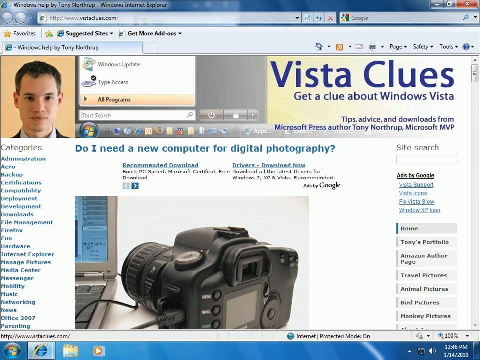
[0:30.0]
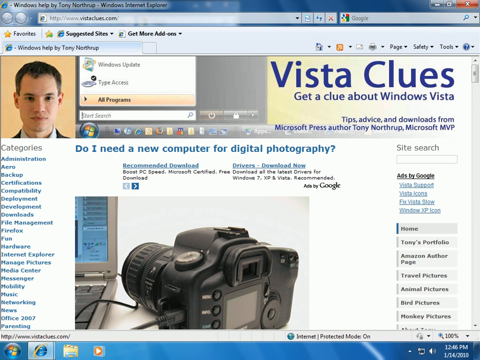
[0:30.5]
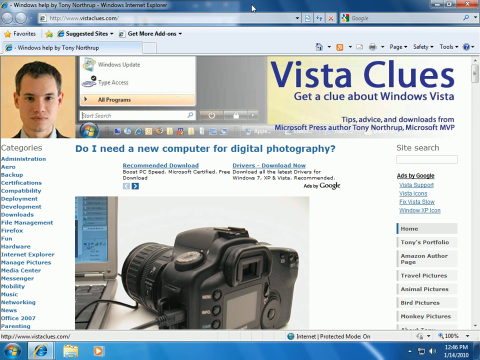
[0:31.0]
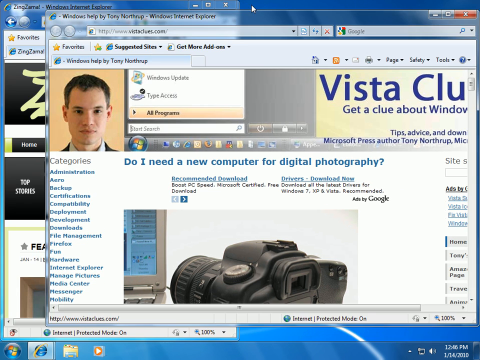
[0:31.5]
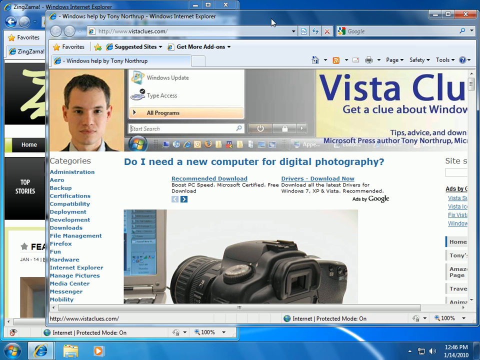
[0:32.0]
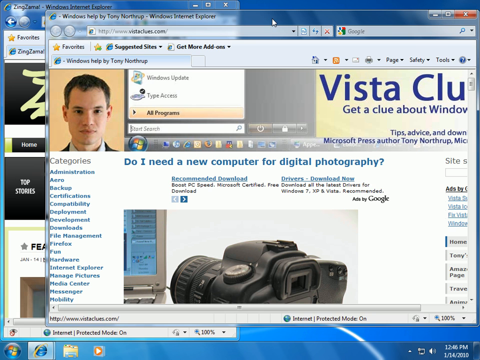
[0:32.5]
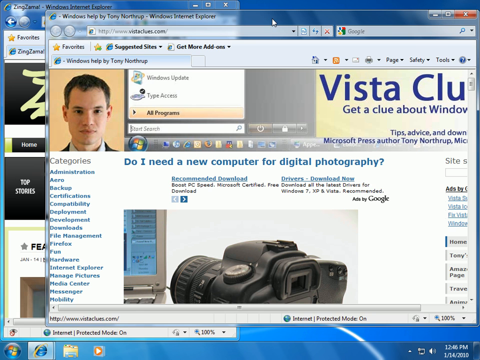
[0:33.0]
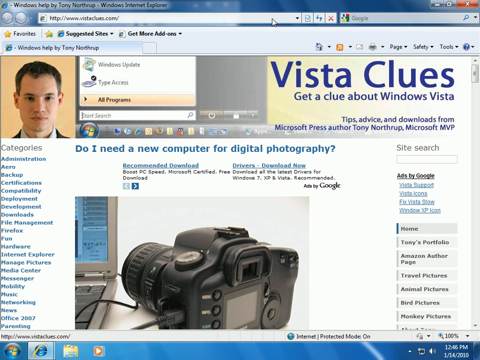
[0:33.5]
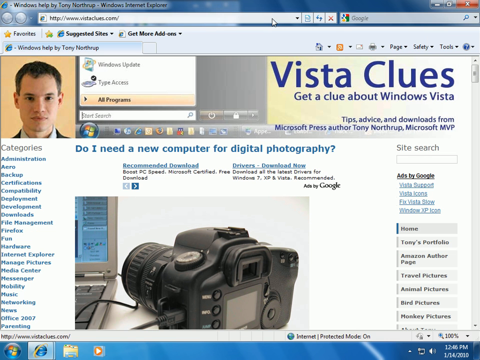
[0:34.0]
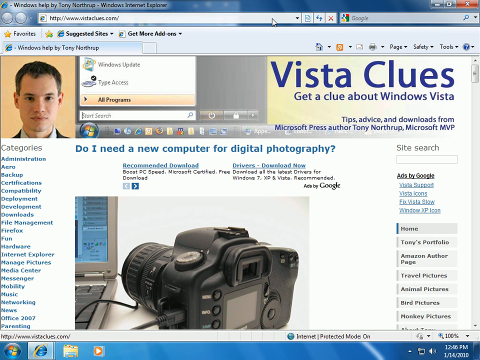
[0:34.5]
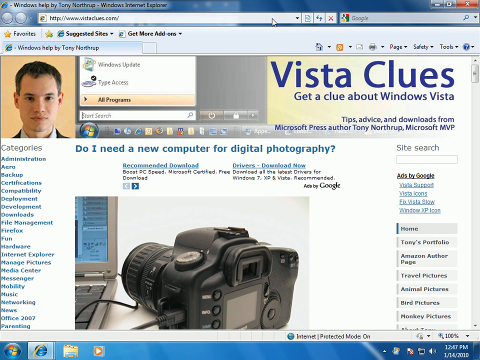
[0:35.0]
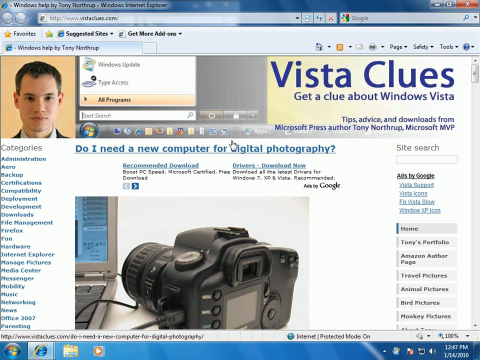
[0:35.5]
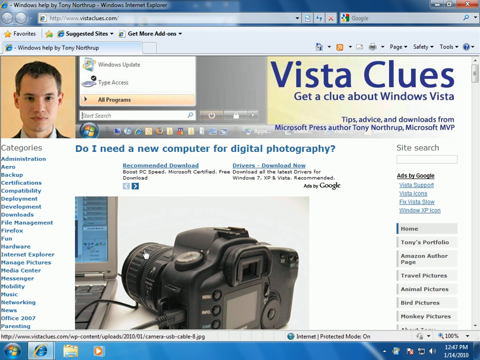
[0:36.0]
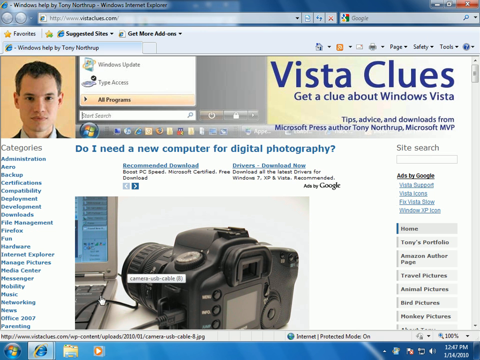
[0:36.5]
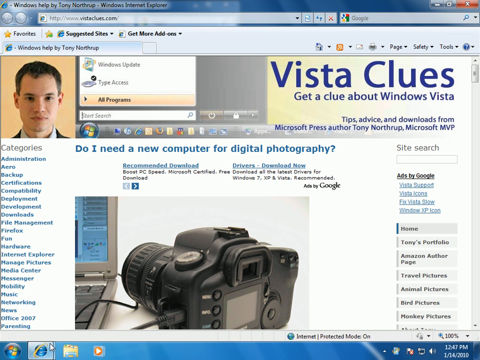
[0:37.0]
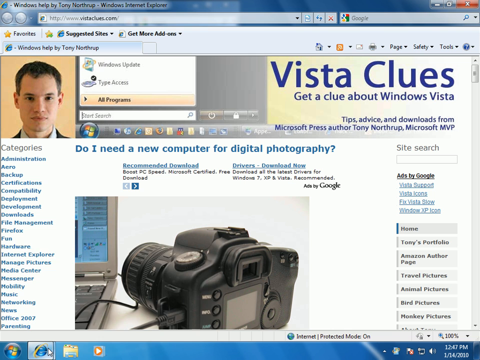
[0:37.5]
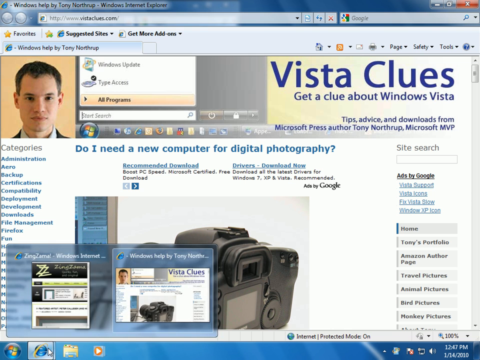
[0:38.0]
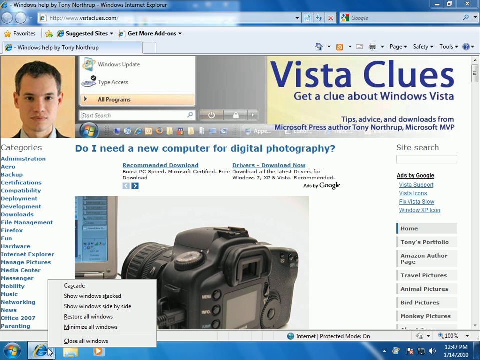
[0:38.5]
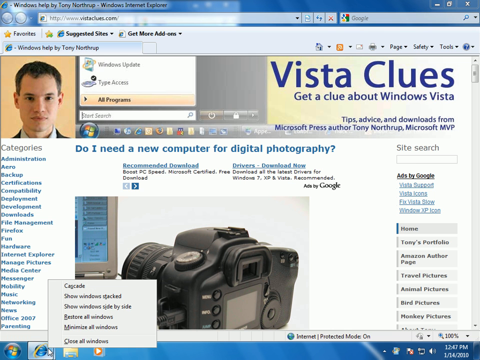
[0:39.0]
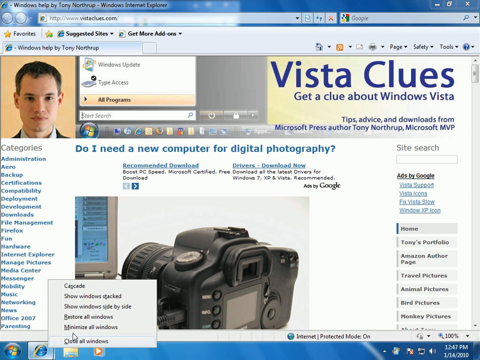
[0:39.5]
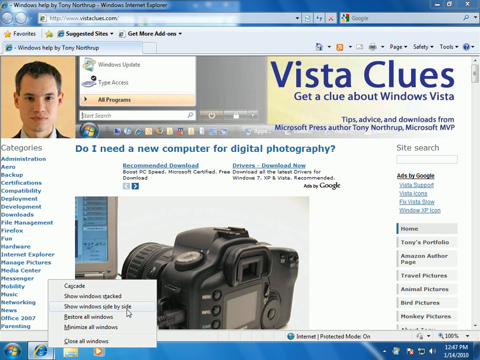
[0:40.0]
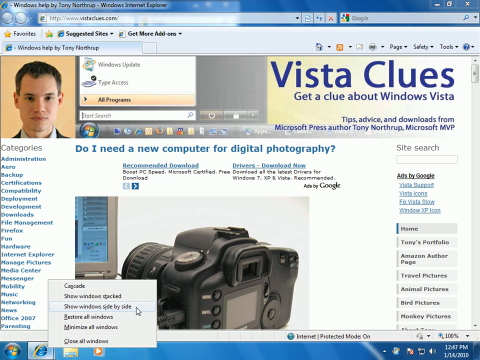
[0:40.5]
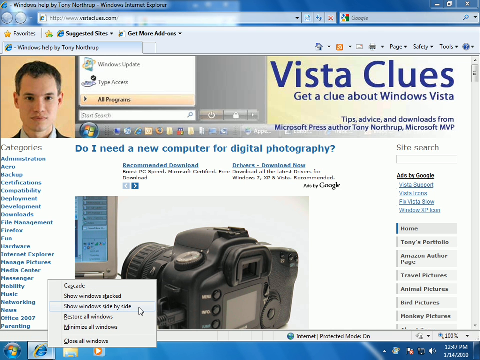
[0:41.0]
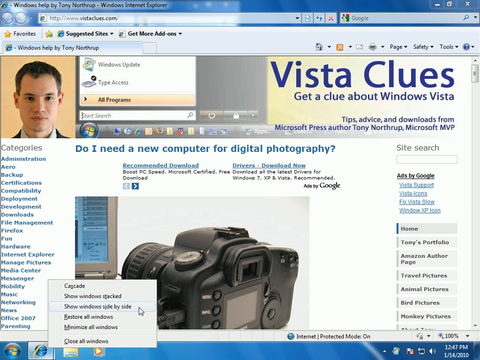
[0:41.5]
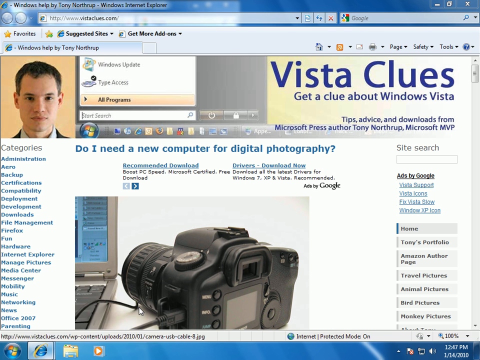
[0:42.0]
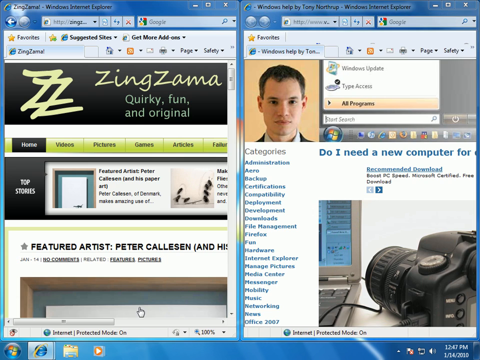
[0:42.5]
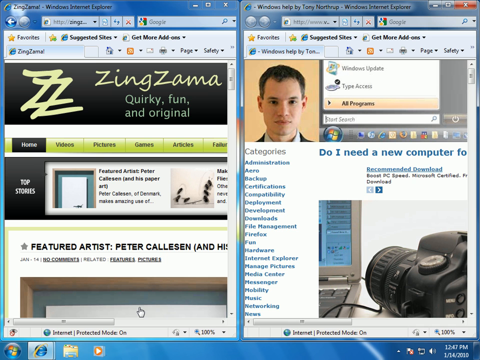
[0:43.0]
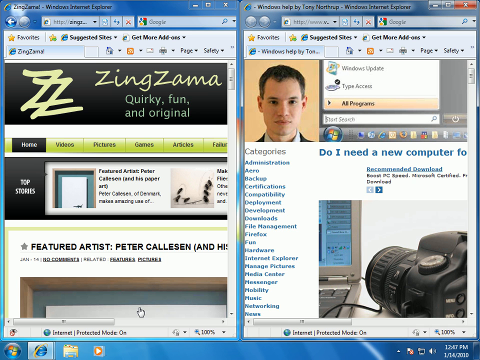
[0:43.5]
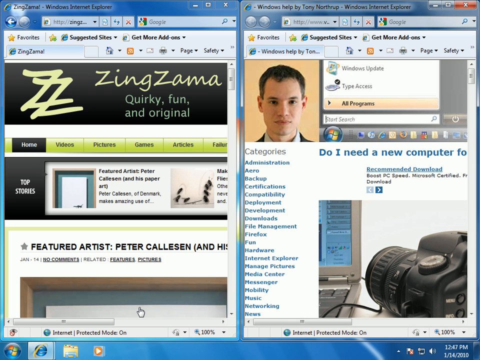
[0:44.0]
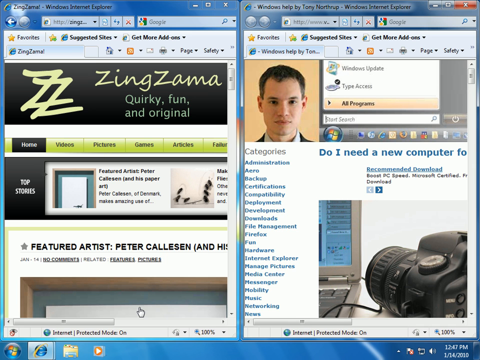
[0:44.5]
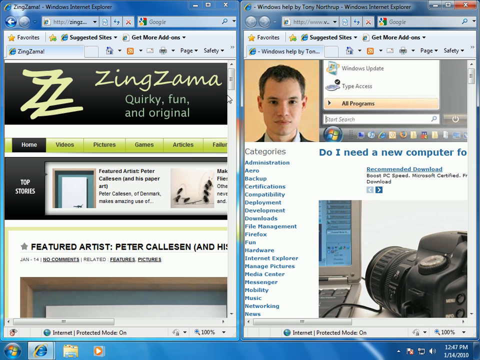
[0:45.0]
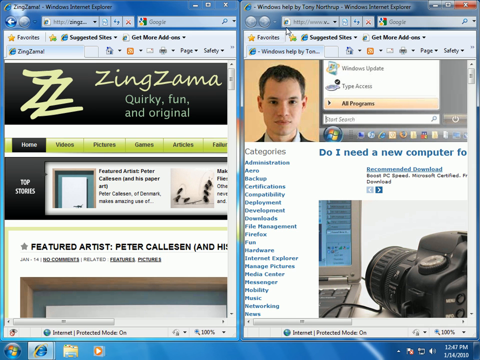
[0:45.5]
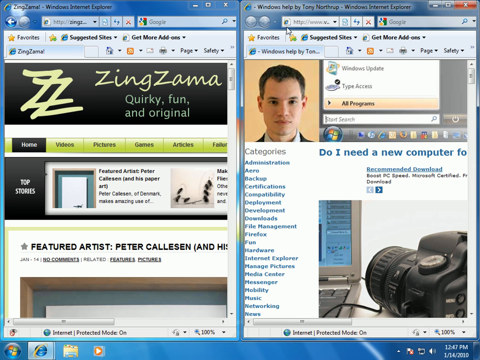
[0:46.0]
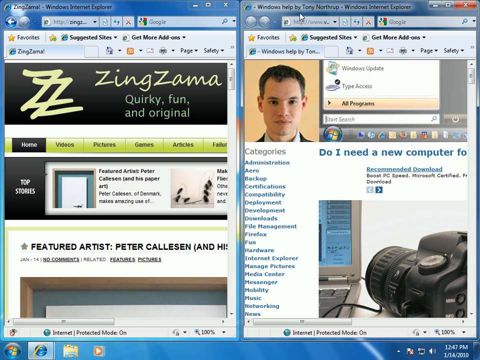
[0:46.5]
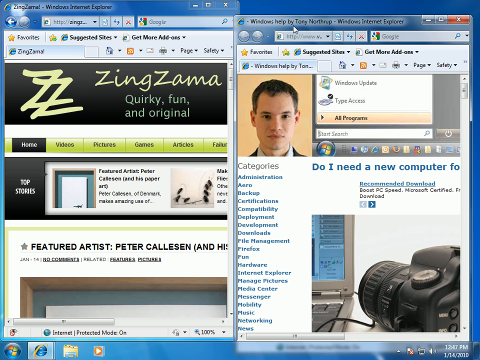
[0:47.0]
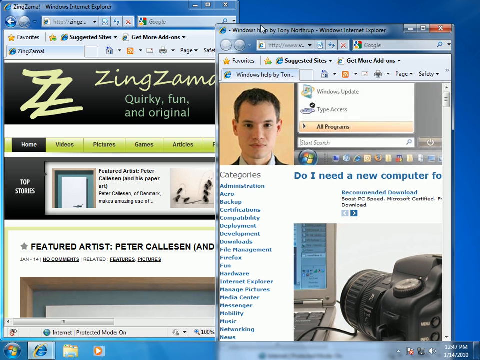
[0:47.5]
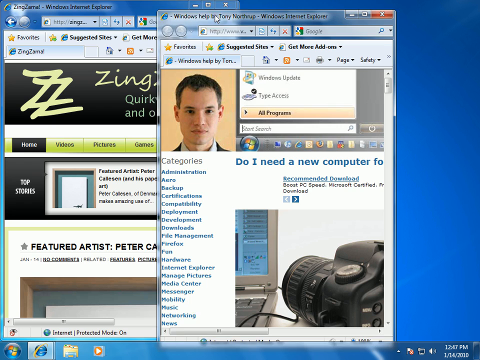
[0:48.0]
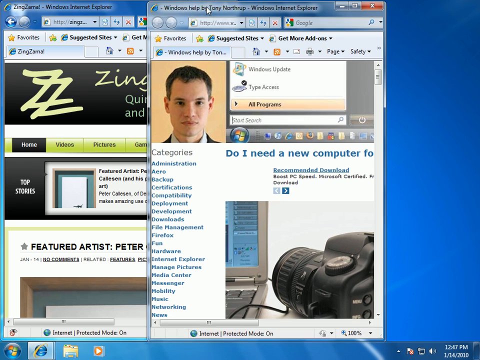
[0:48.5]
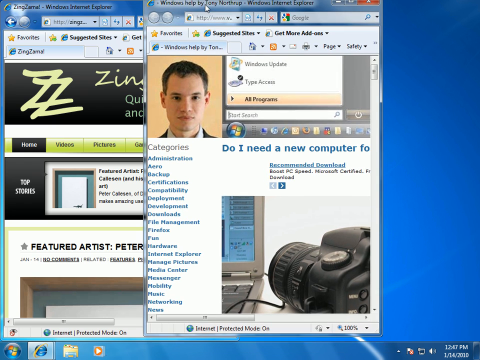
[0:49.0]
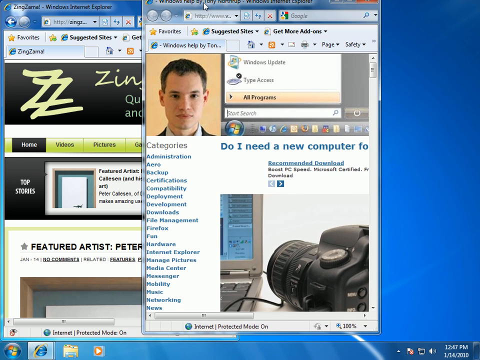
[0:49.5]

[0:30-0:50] With the website maximized, the cursor goes to a window menu listing options including "show windows stacked," "show windows side by side," "restore all windows," and one more option at the bottom. This seems to be another way of organizing the windows on the monitor. Where the menu was opened is not entirely clear; it appears to be near the bottom of the screen, from the Windows Internet Explorer button at the very bottom, and the menu has a ring around it. The options appear very similar to the manual window arrangements demonstrated earlier.